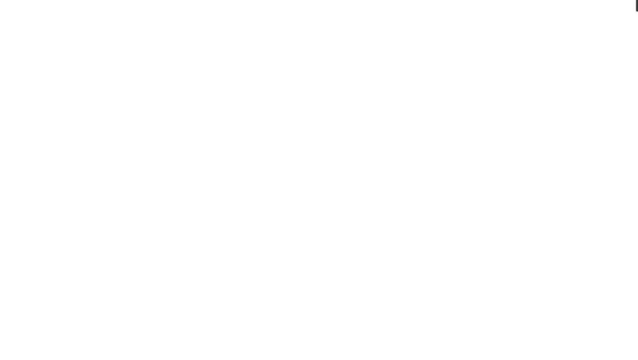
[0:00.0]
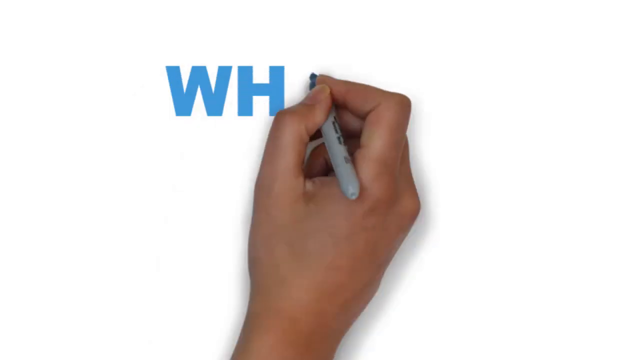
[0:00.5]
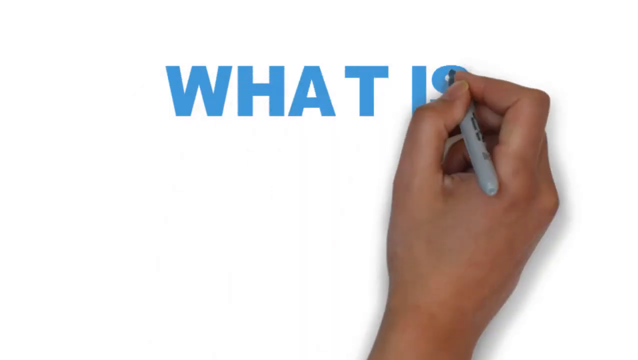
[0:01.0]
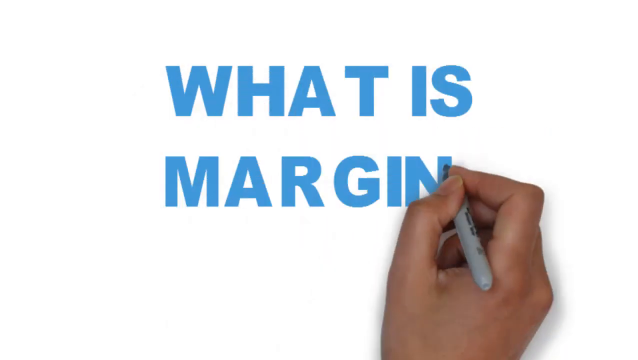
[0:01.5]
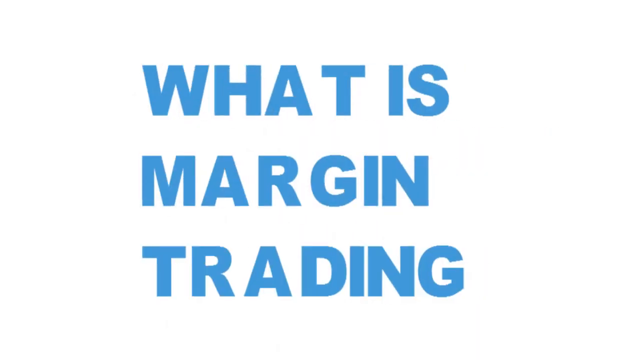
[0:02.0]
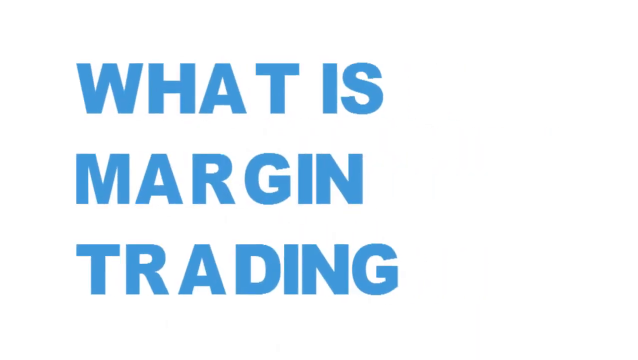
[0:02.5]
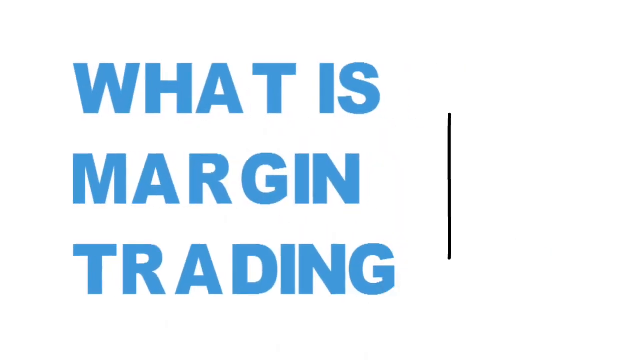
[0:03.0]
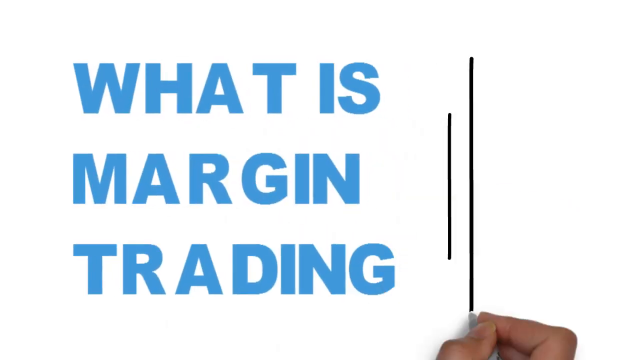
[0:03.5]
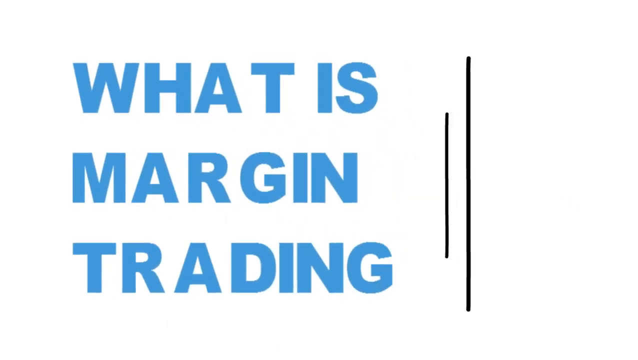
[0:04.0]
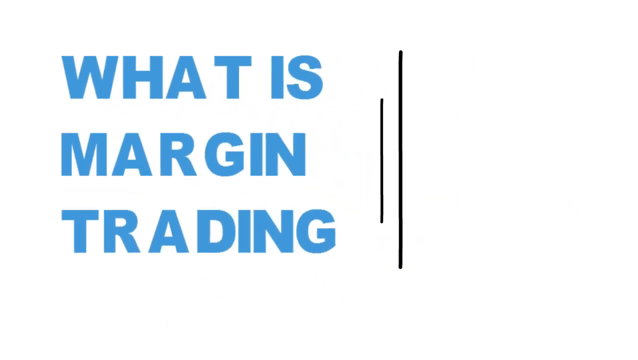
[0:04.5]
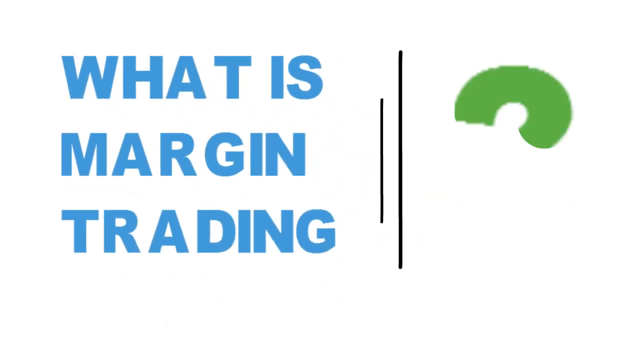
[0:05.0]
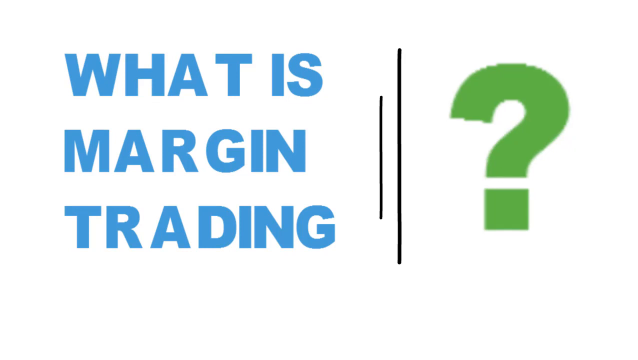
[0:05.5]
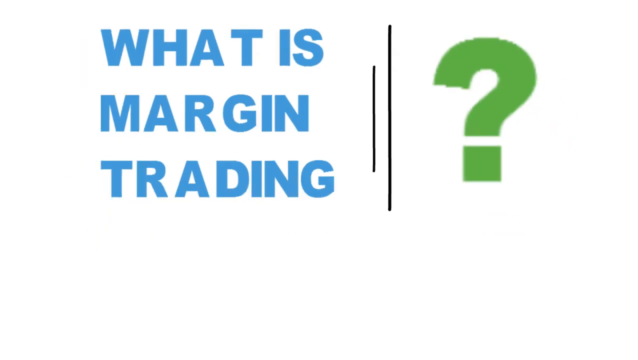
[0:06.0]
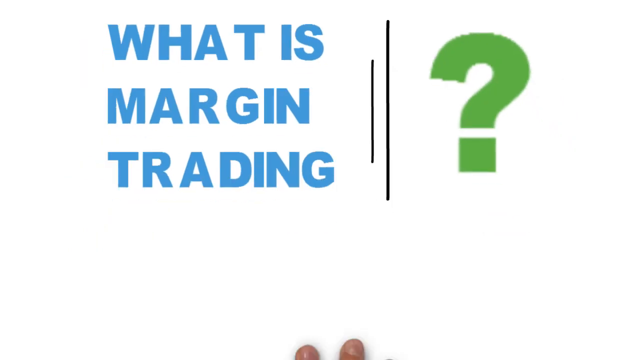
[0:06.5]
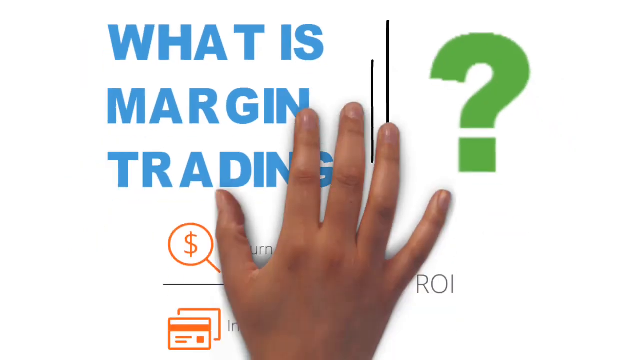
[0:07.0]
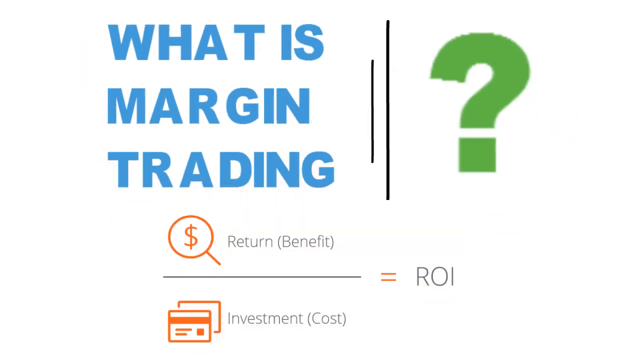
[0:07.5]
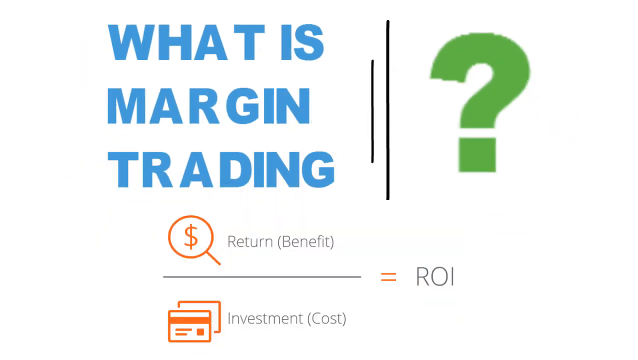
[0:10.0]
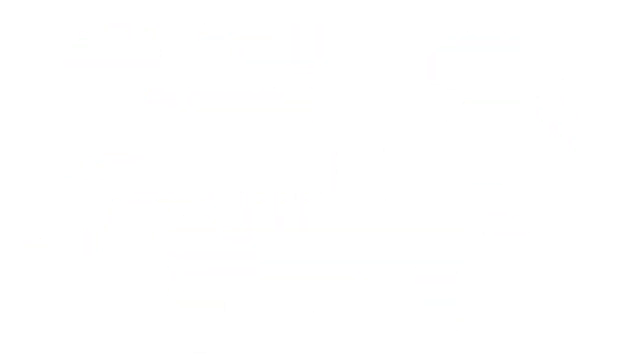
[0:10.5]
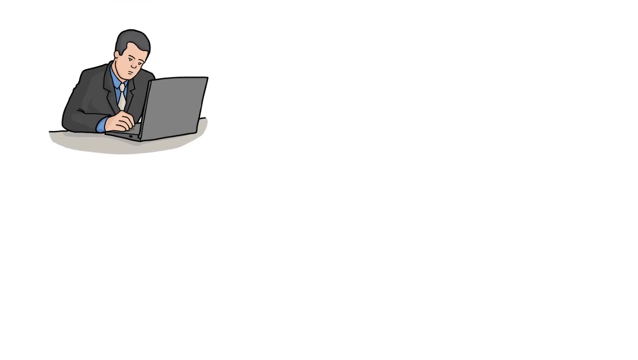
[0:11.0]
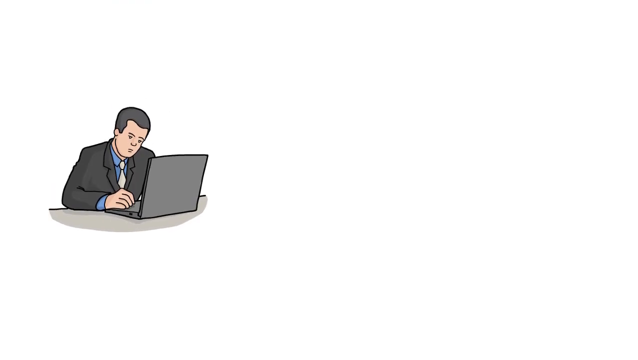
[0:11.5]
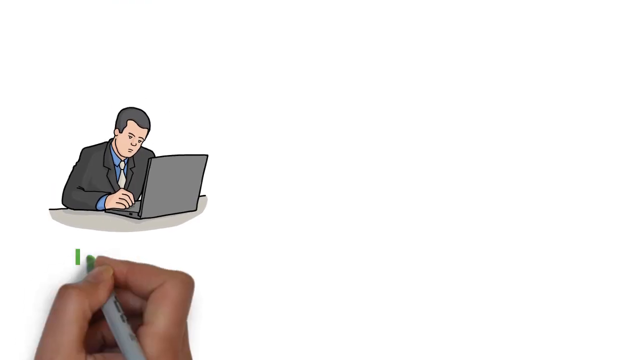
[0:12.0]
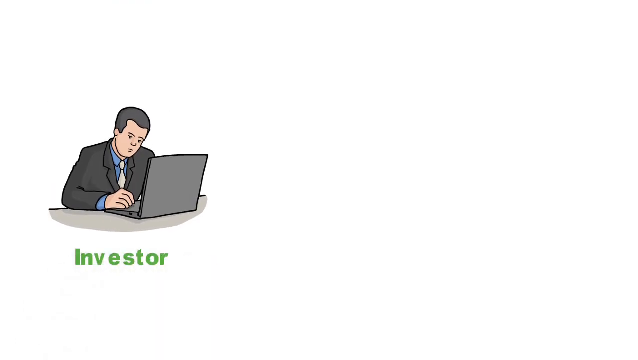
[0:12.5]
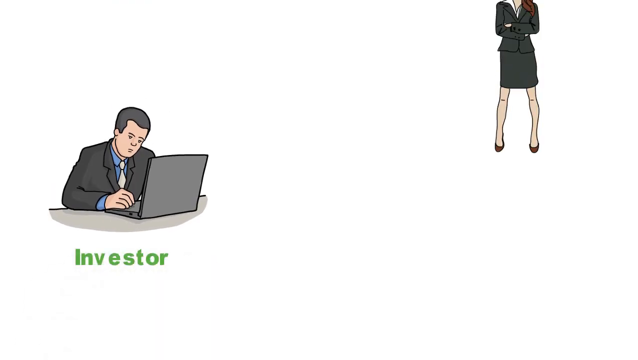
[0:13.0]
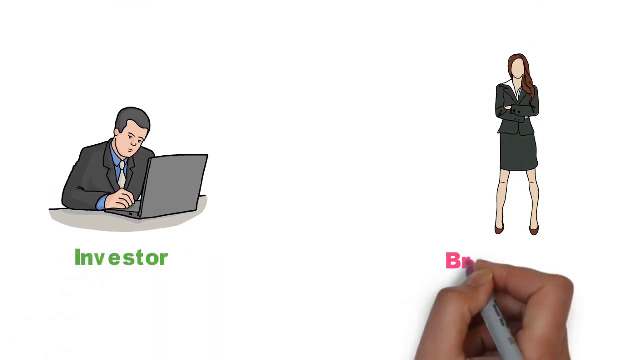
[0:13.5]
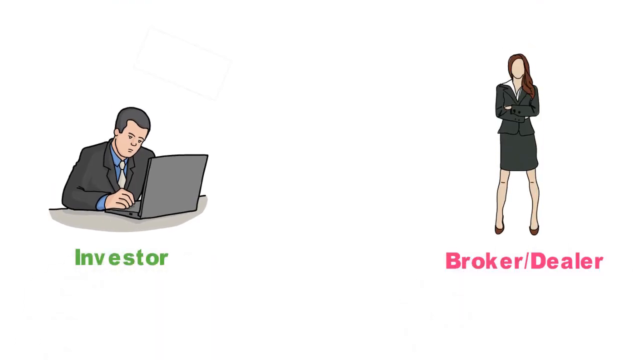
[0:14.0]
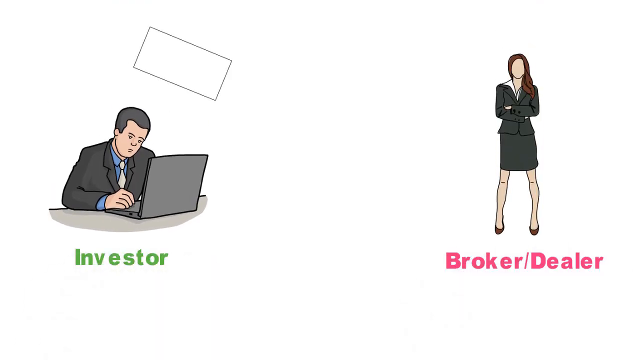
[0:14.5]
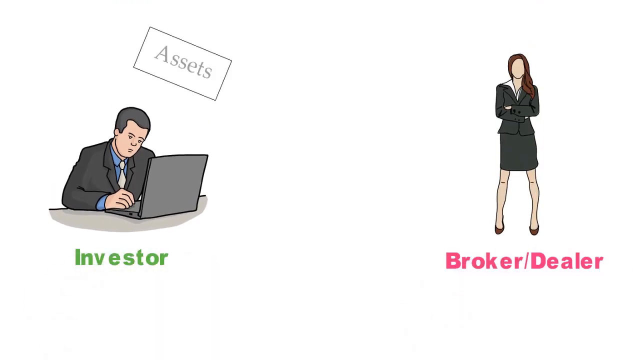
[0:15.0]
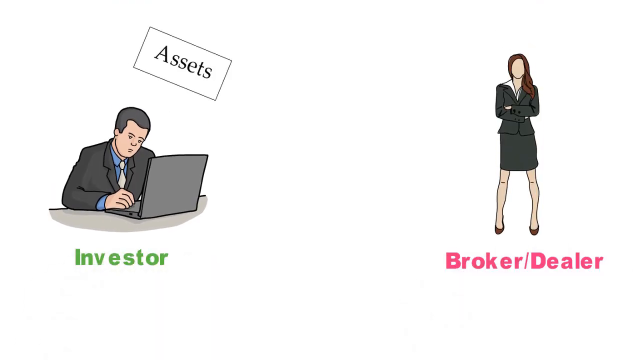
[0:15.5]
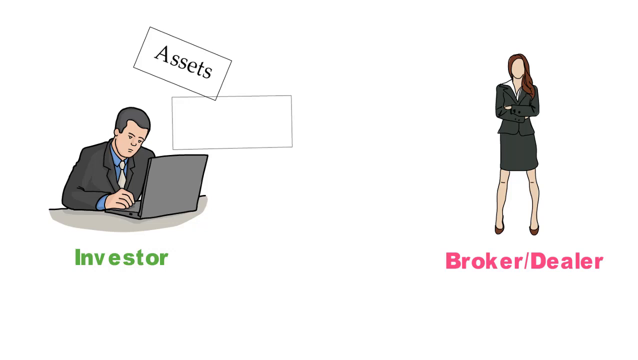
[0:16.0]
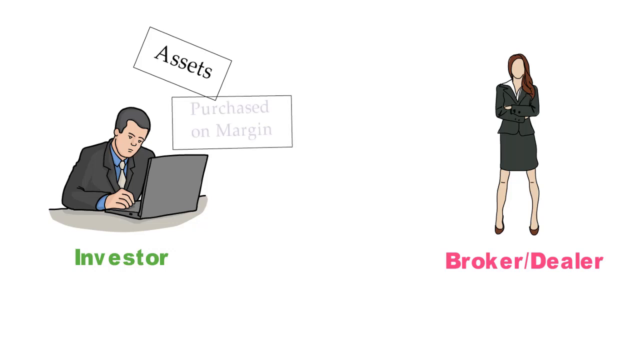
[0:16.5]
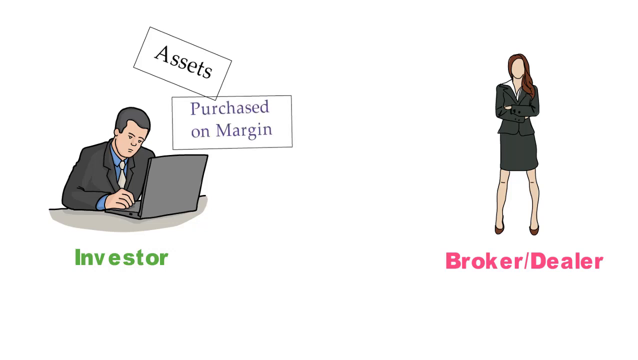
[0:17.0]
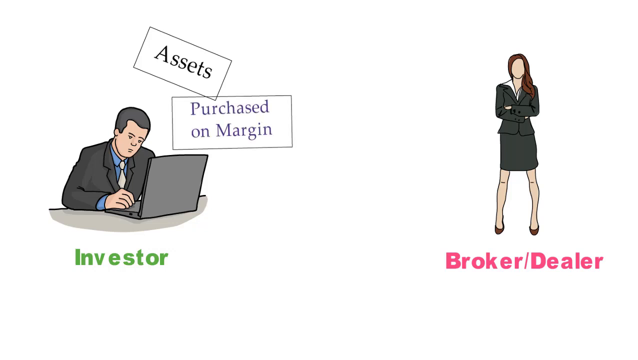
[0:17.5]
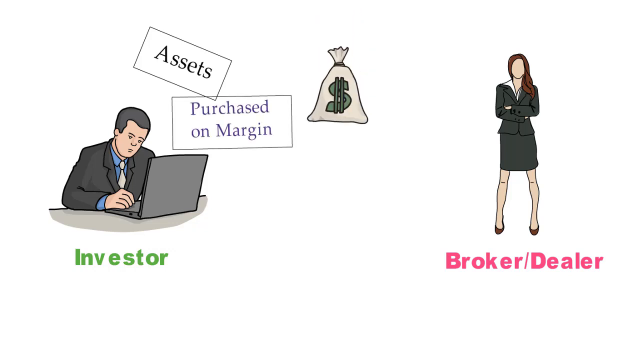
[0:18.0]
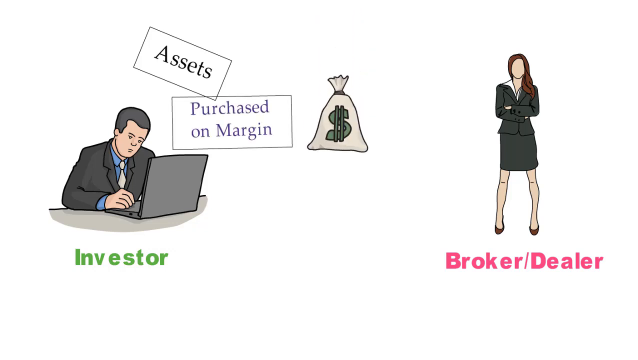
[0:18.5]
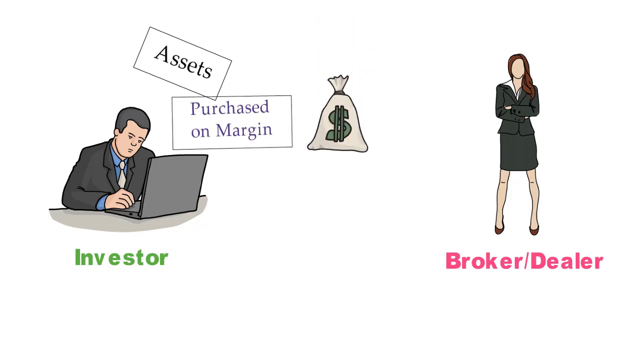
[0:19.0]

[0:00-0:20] The video is a tutorial about margin trading and what it is. It opens with a heading coming onto the screen: on a white background, a hand holding a Sharpie comes up onto the screen. The words "What is margin trading" appear in blue, followed by two vertical black lines and then a green question mark to the right. Immediately underneath is an equation stating that return divided by investment equals ROI. Next, an animated image comes down from the top of the screen of a man sitting at a desk looking at a computer or laptop, labeled the investor. Then, on the right of the screen, an image of a woman pops up from the top, labeled broker dealer. A money bag comes down the center of the screen, in between the broker and the dealer. The money bag is white with a green dollar sign on its front.